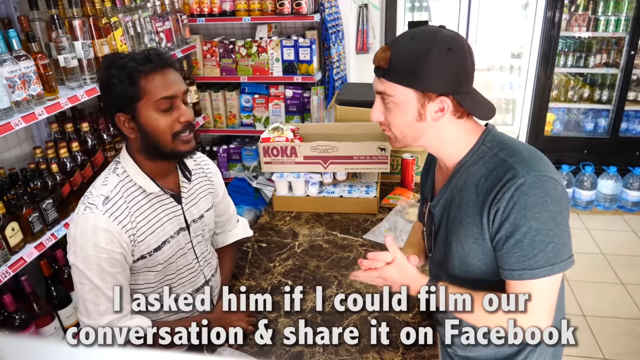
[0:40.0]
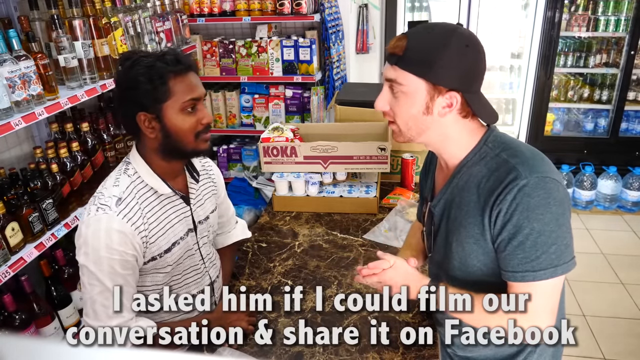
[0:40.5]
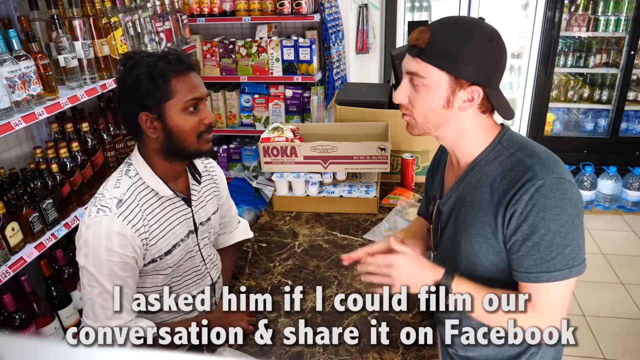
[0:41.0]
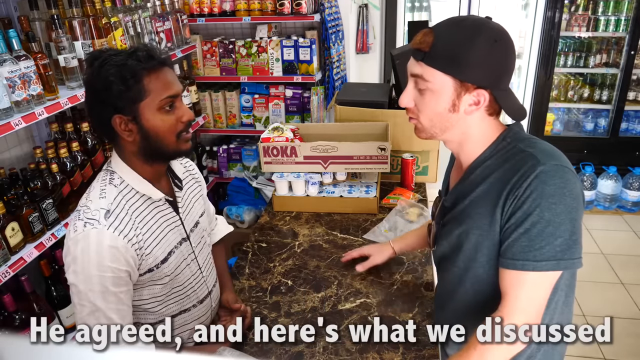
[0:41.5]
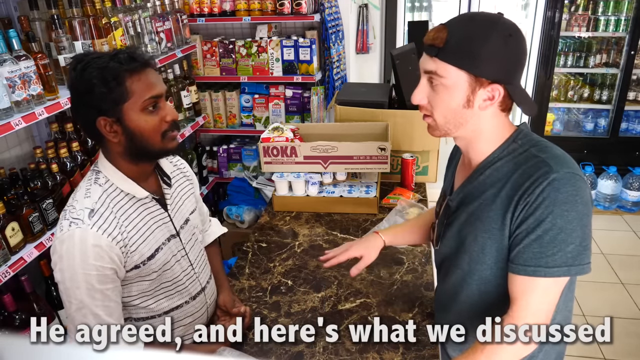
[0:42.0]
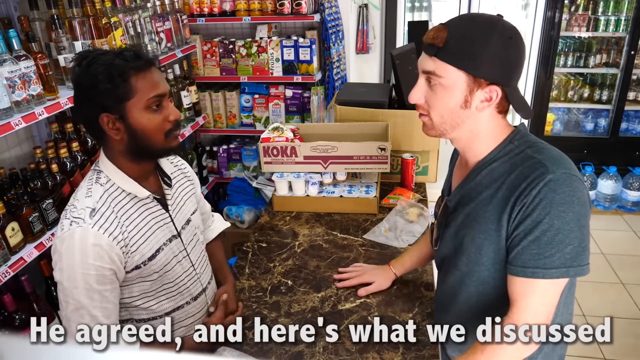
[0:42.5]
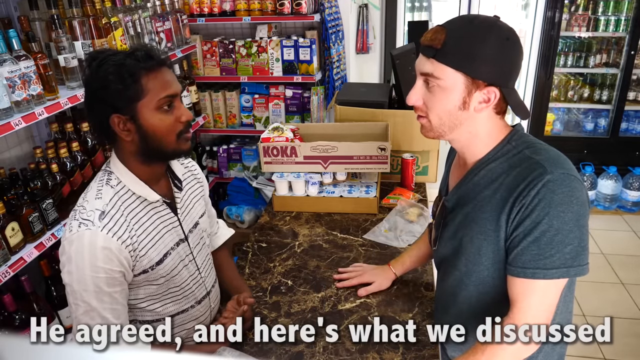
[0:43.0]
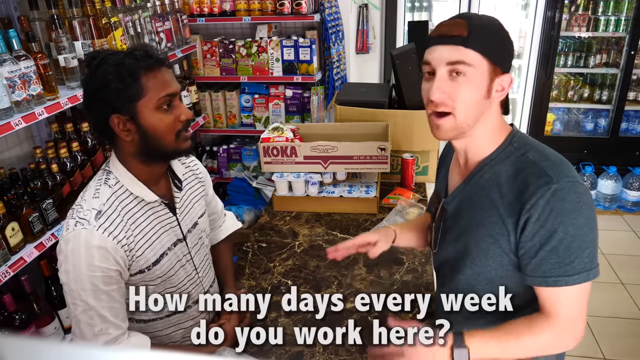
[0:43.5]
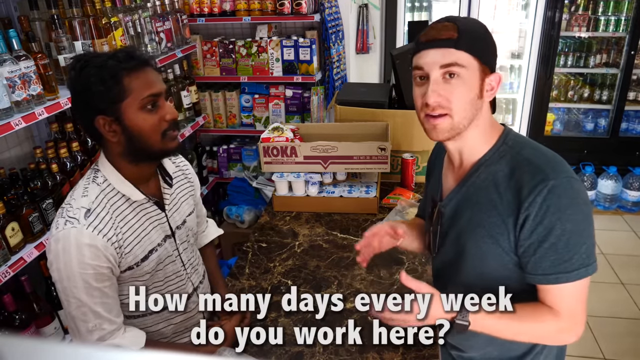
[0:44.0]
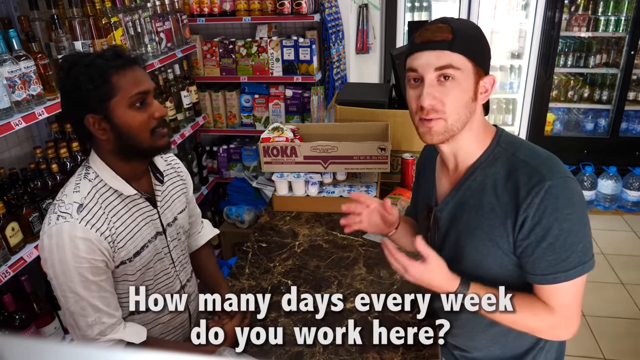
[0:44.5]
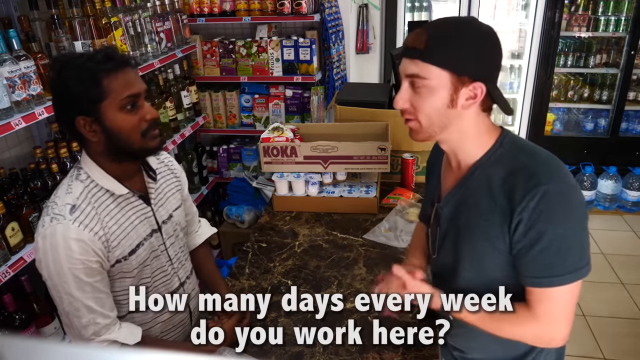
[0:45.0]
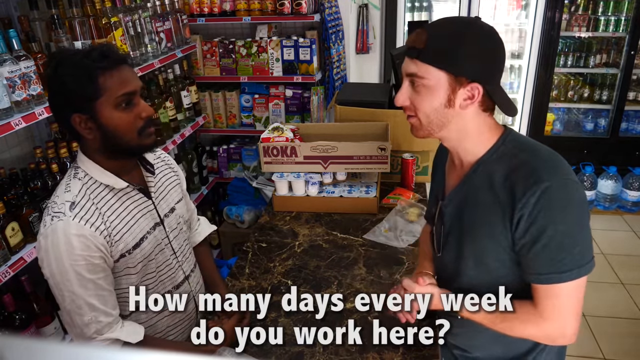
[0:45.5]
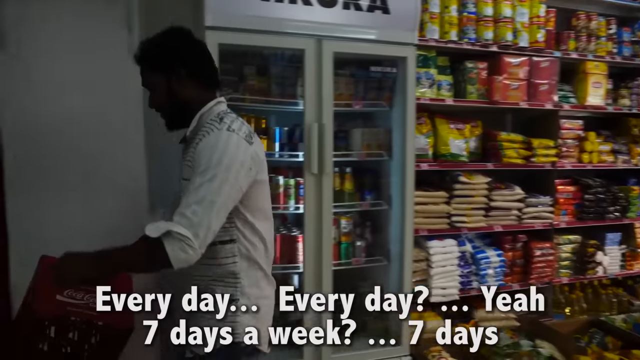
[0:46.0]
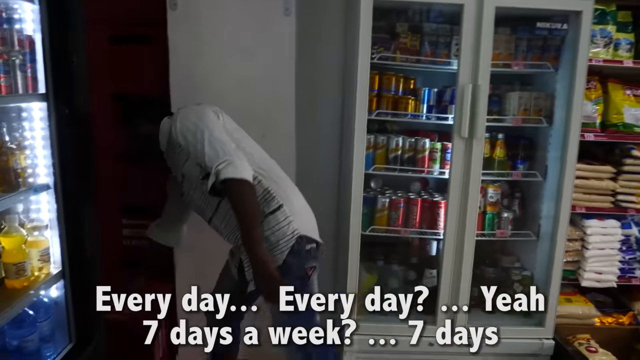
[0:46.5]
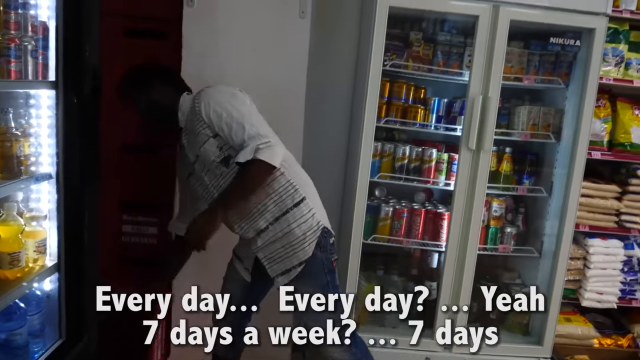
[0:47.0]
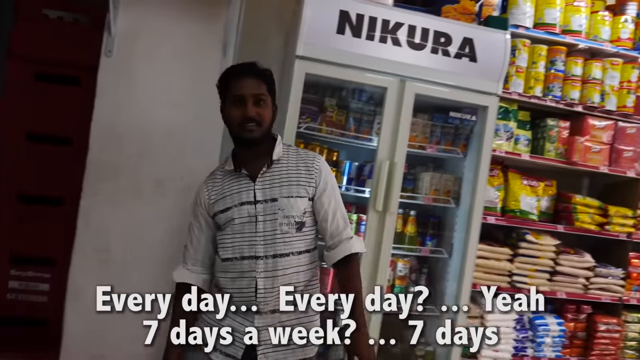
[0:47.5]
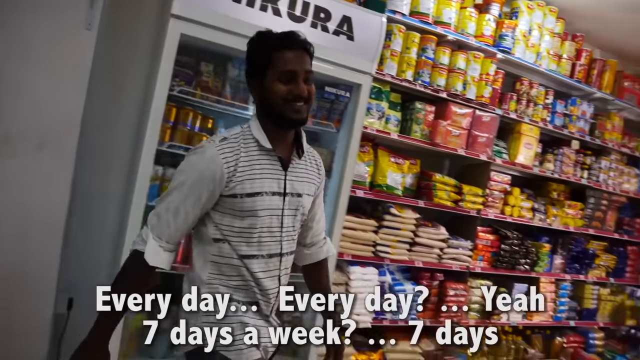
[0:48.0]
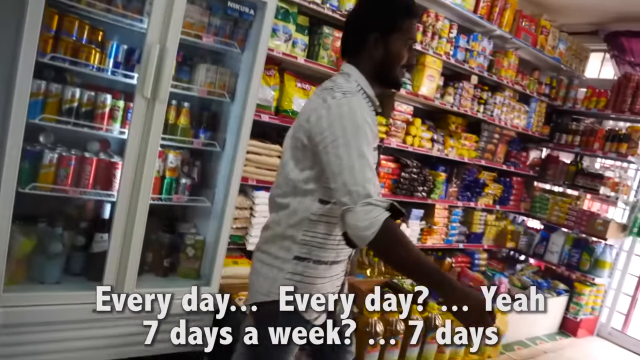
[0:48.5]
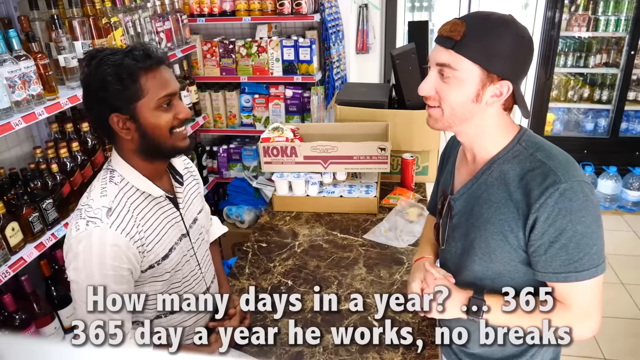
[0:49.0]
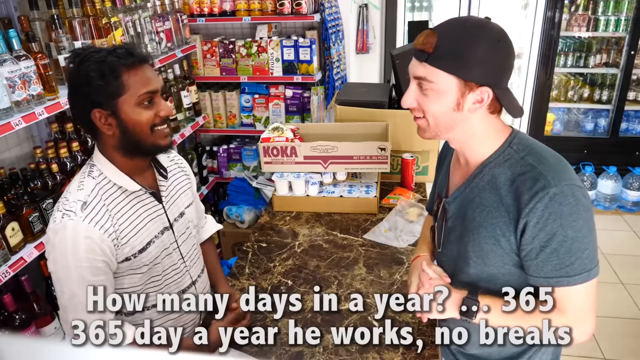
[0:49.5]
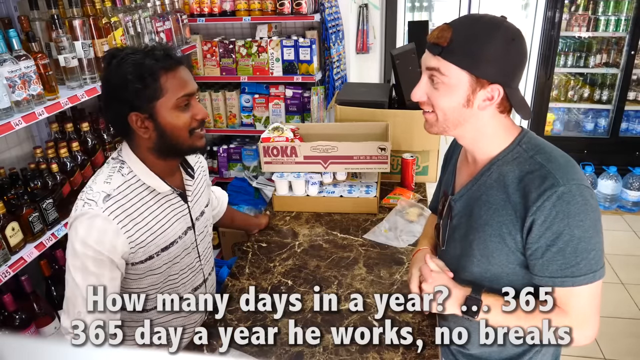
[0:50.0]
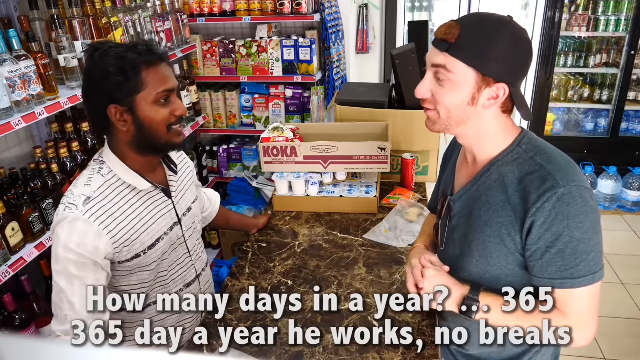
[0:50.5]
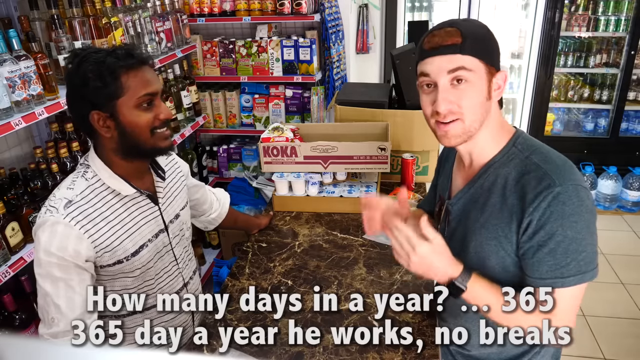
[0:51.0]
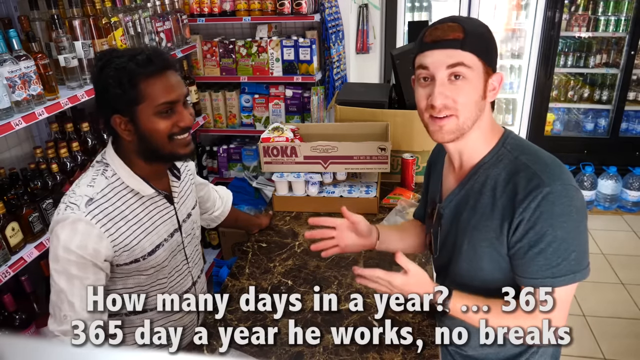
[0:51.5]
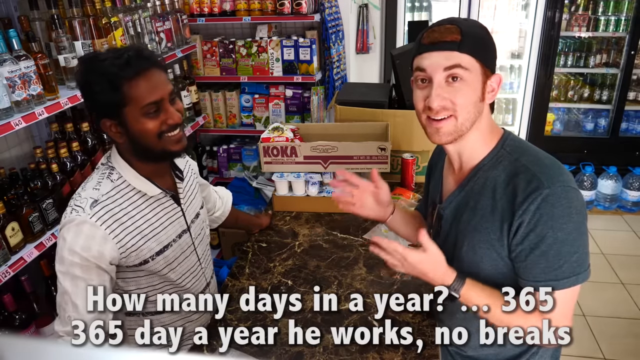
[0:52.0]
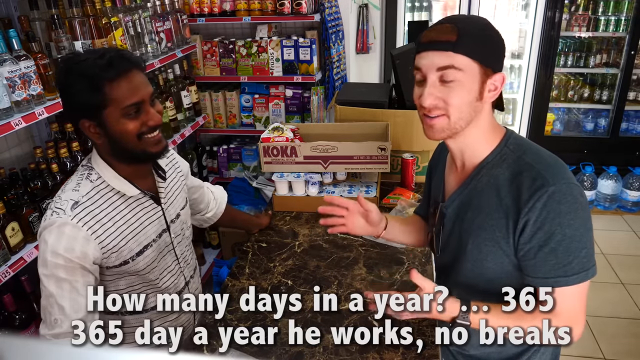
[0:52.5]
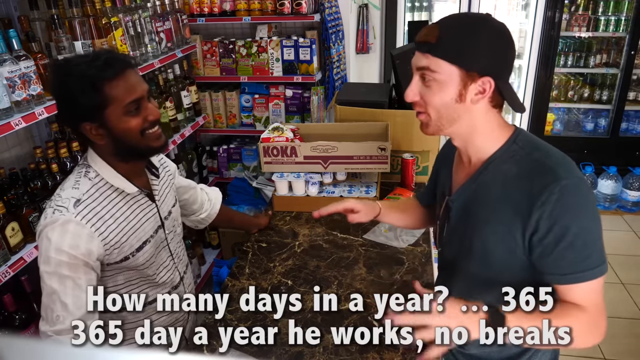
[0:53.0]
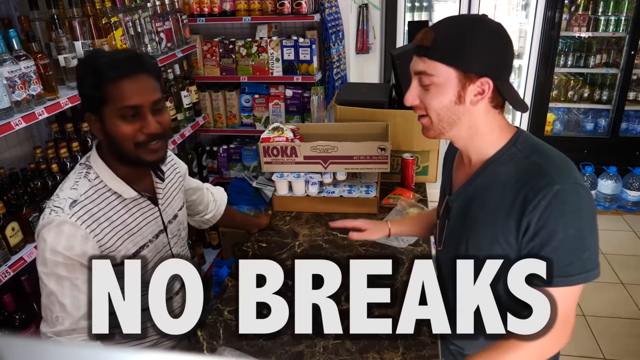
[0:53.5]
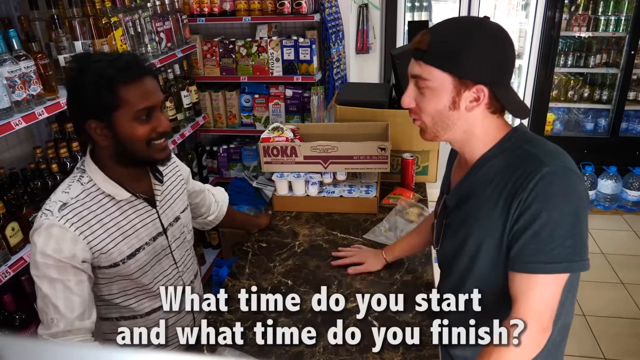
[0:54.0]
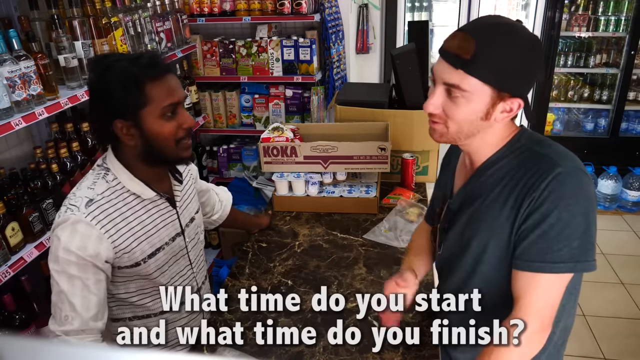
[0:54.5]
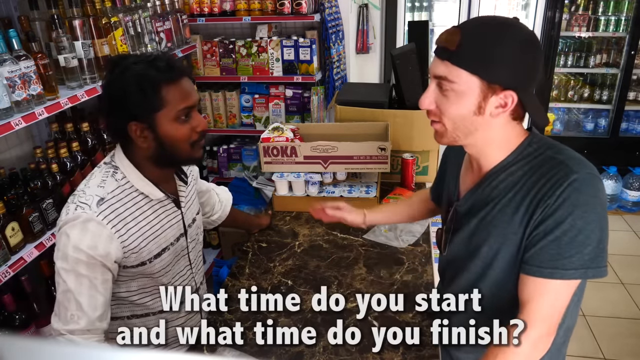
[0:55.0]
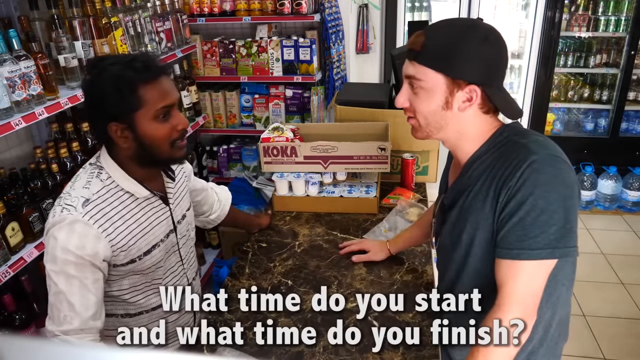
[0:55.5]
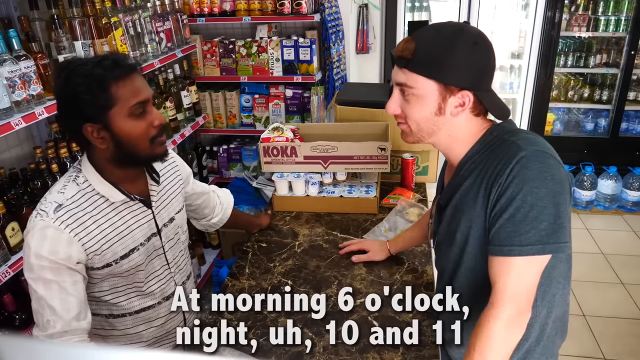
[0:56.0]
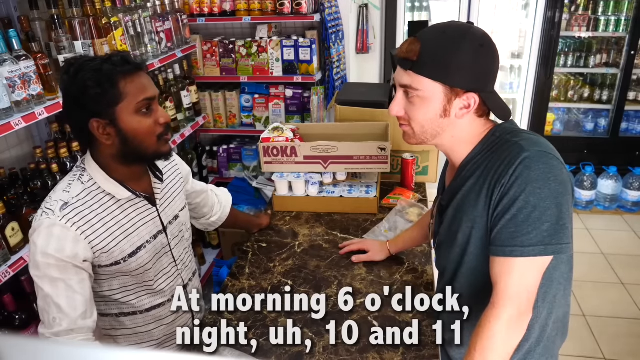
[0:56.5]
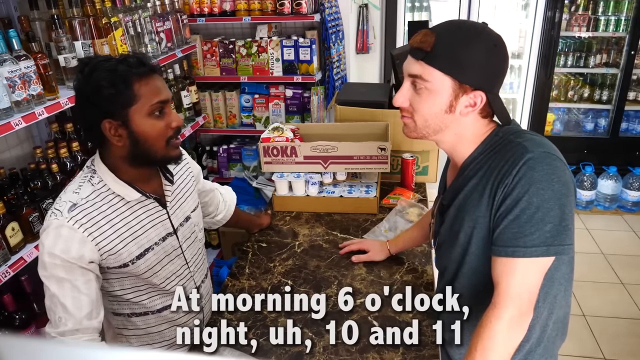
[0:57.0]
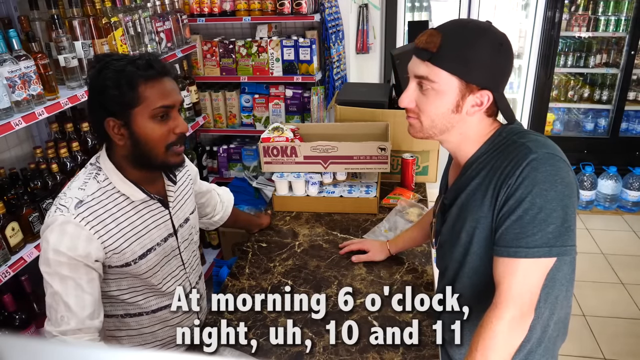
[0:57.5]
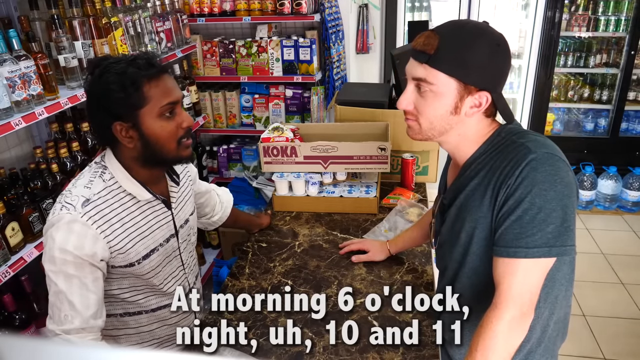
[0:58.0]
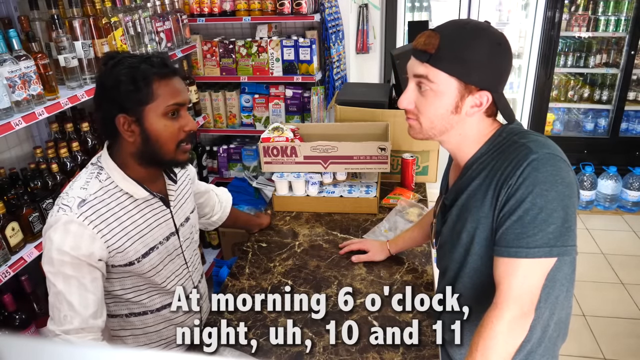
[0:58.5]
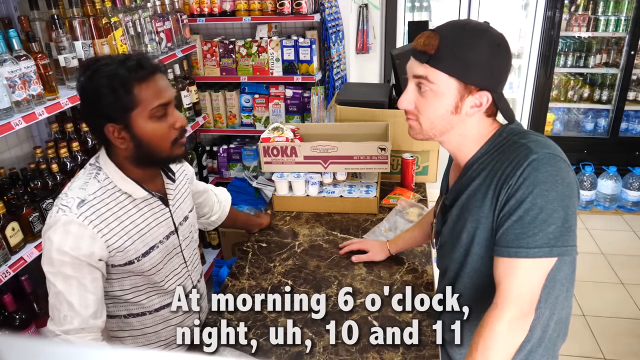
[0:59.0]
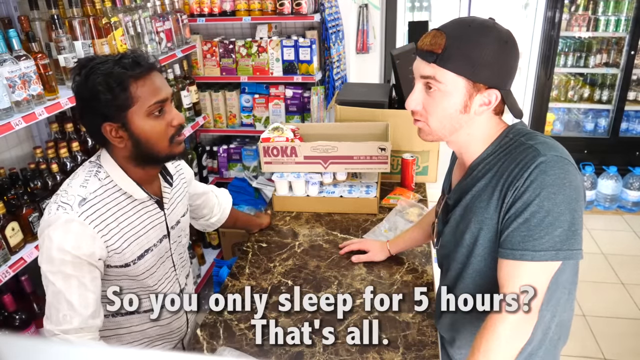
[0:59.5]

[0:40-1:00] The man who entered is a white man wearing a dark grey t-shirt and a black cap, and the two seem to be the same height. The Indian man wears a white shirt that seems to be long-sleeved, with a stripe on the front; the sleeves have no decoration or stripes, and there seem to be some drawings on the shoulder. They talk to each other while standing next to a brown marbled counter, apparently about how the Indian man works in his shop, with white subtitles at the bottom of the screen. The Indian man then moves away from the counter toward what seems to be the door and comes back.